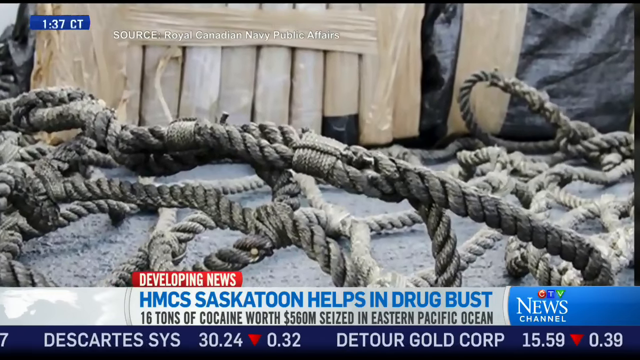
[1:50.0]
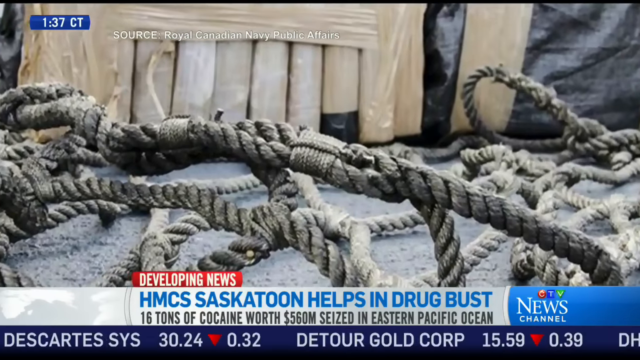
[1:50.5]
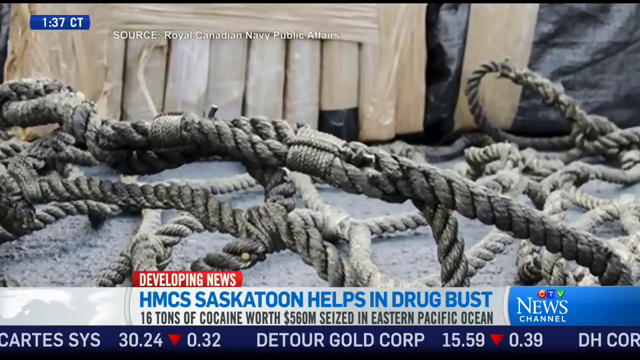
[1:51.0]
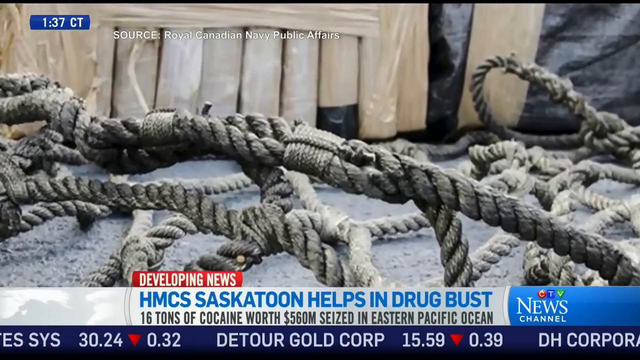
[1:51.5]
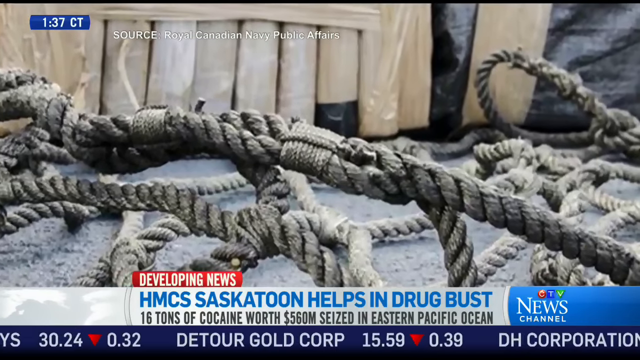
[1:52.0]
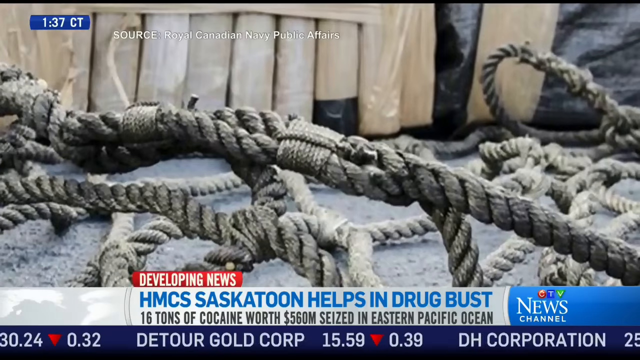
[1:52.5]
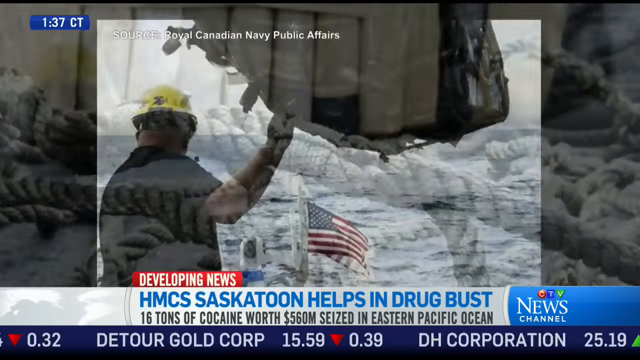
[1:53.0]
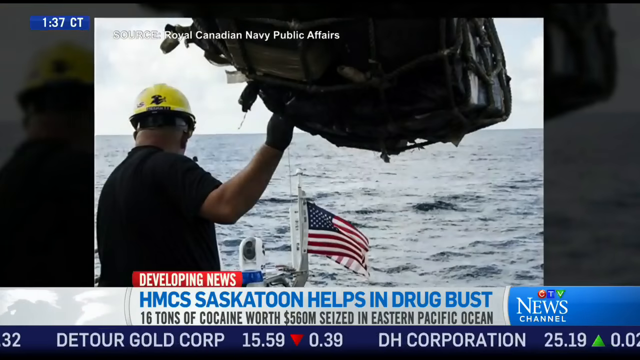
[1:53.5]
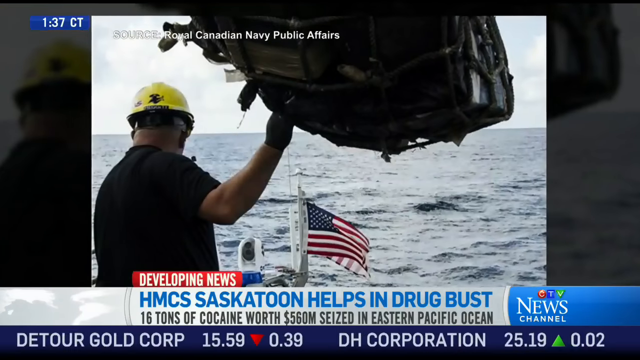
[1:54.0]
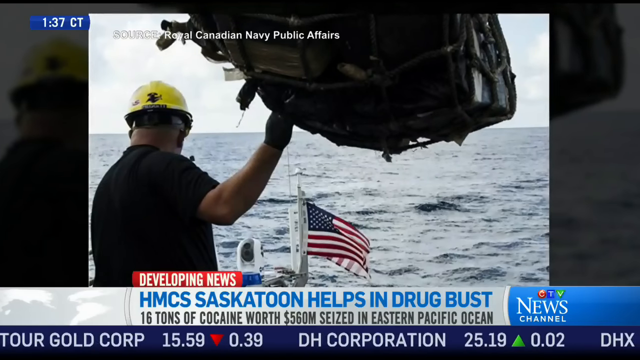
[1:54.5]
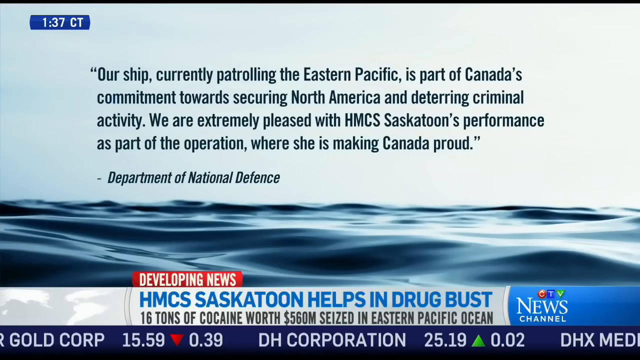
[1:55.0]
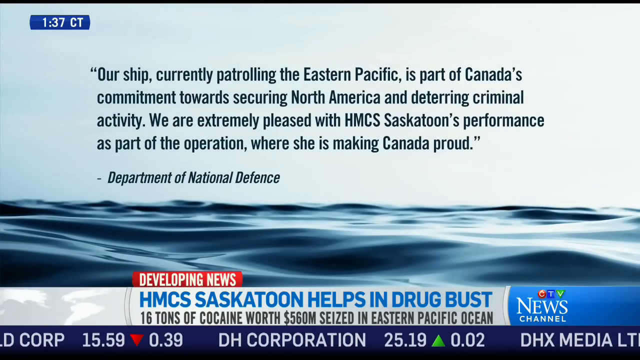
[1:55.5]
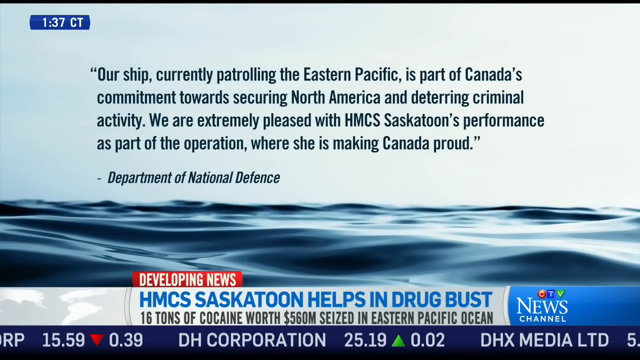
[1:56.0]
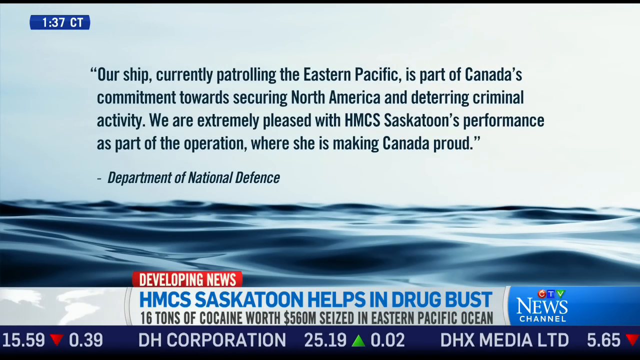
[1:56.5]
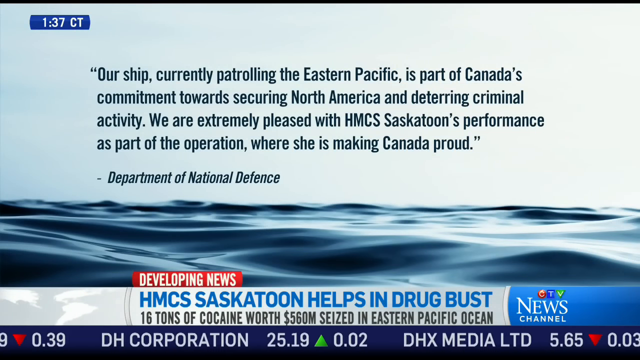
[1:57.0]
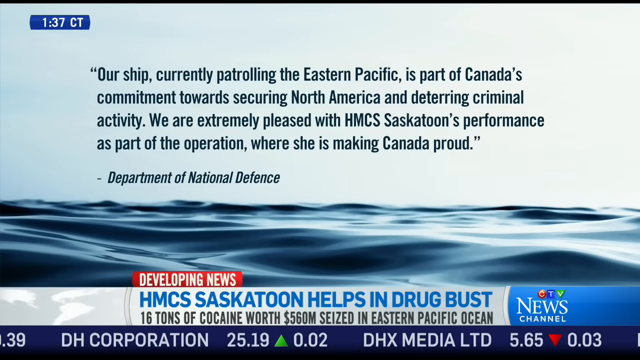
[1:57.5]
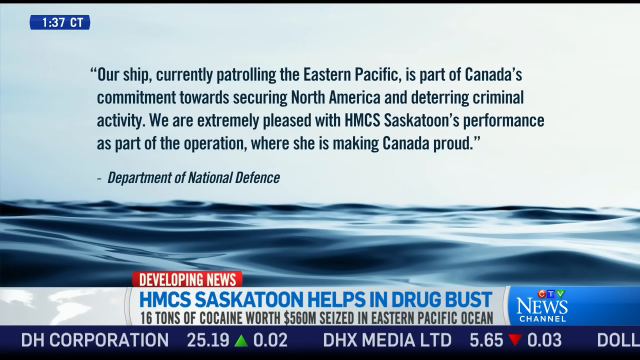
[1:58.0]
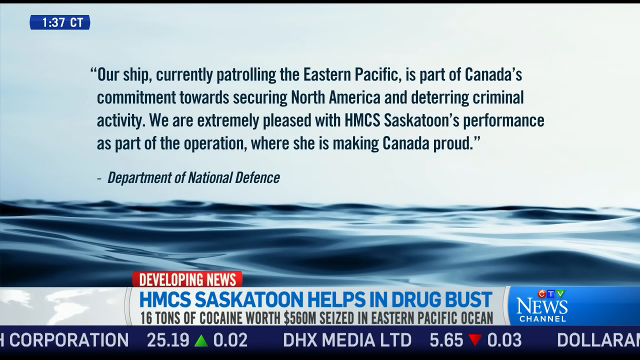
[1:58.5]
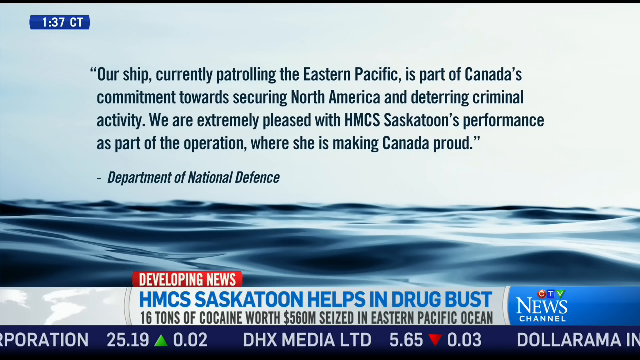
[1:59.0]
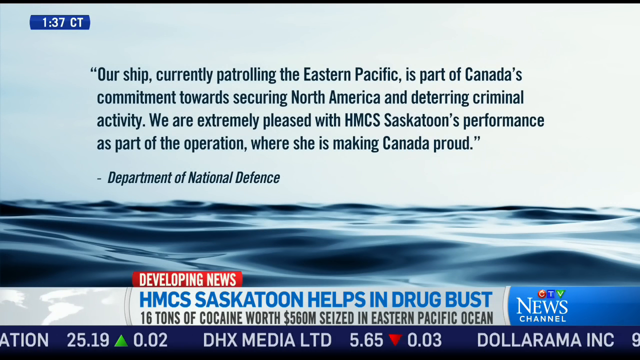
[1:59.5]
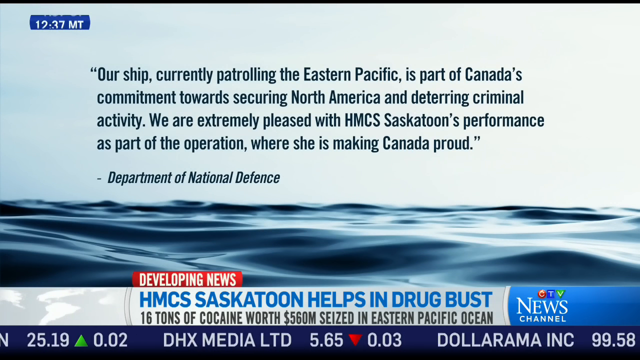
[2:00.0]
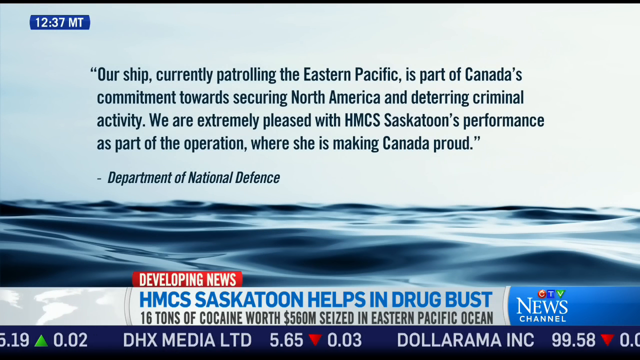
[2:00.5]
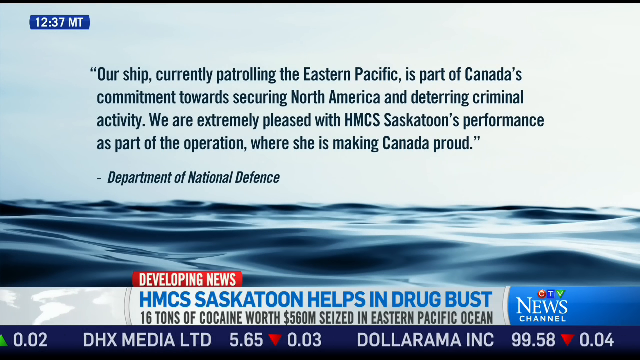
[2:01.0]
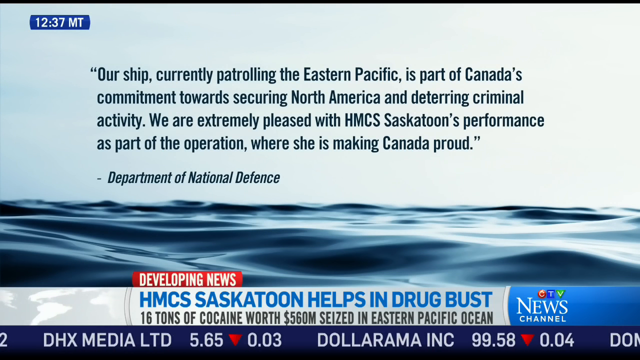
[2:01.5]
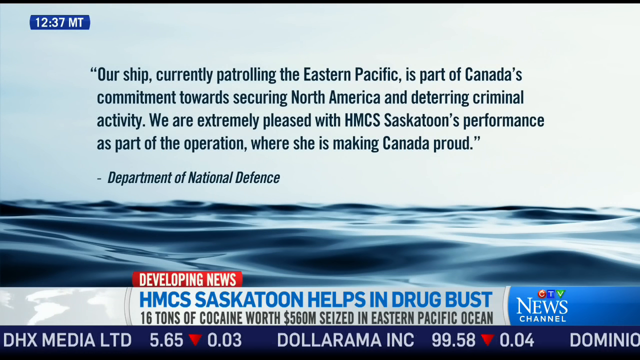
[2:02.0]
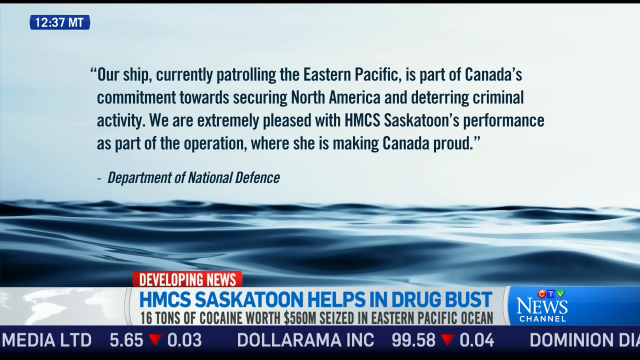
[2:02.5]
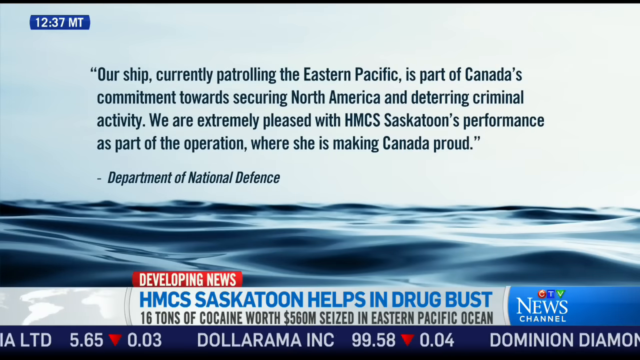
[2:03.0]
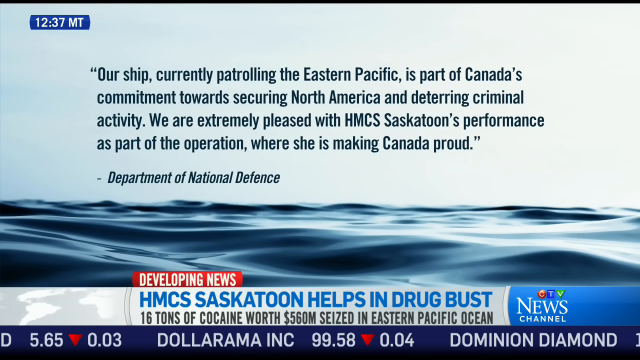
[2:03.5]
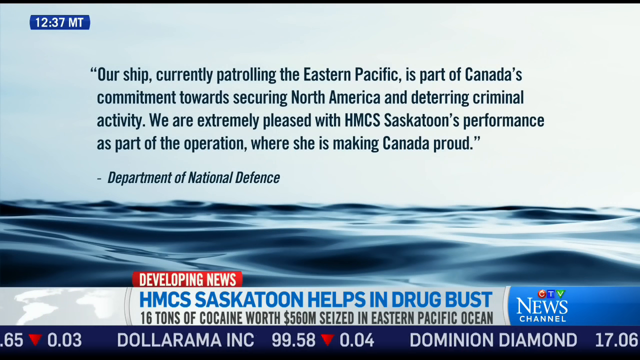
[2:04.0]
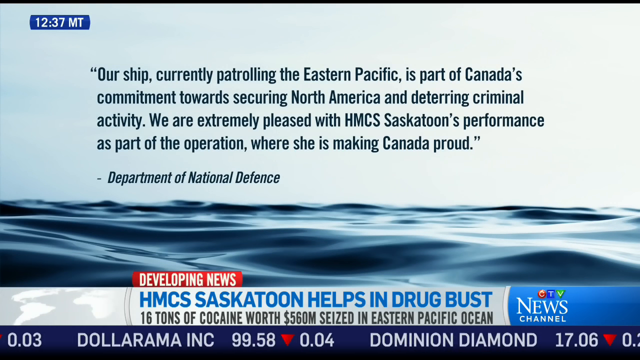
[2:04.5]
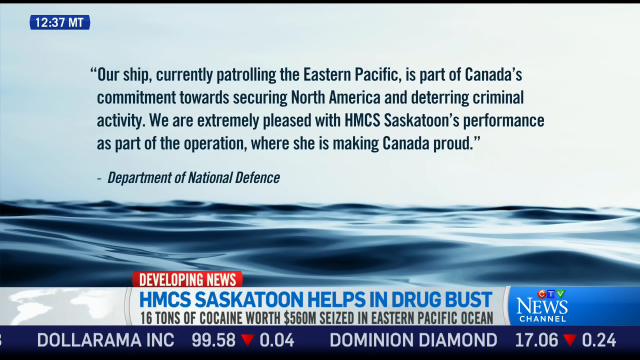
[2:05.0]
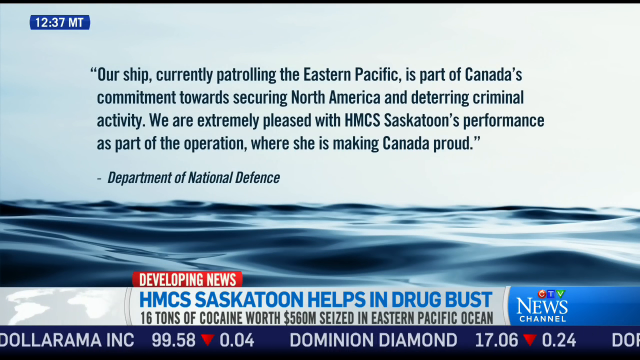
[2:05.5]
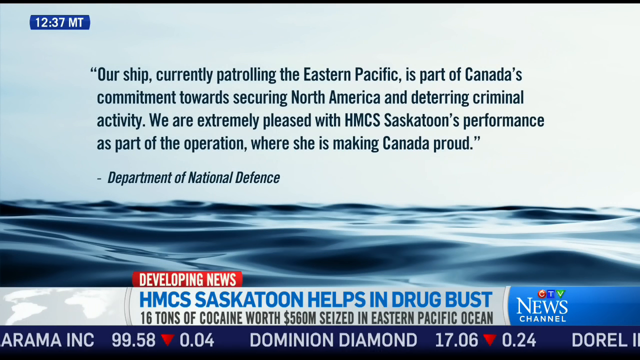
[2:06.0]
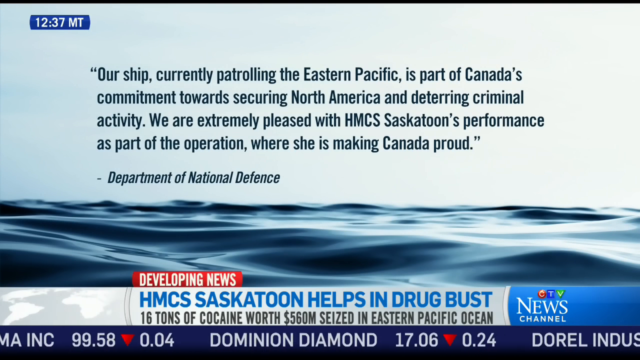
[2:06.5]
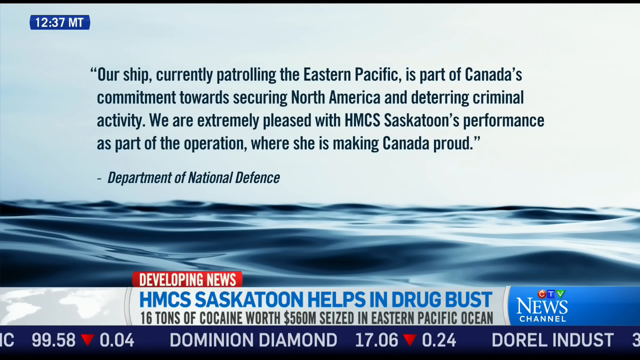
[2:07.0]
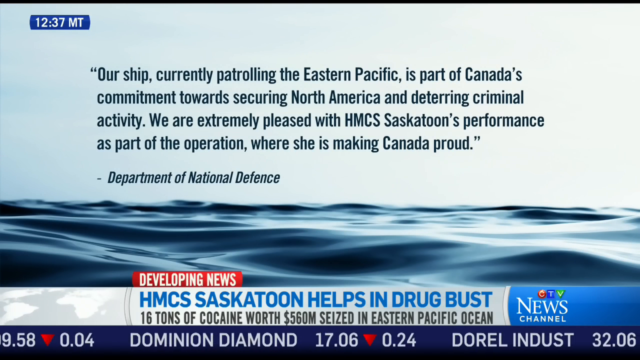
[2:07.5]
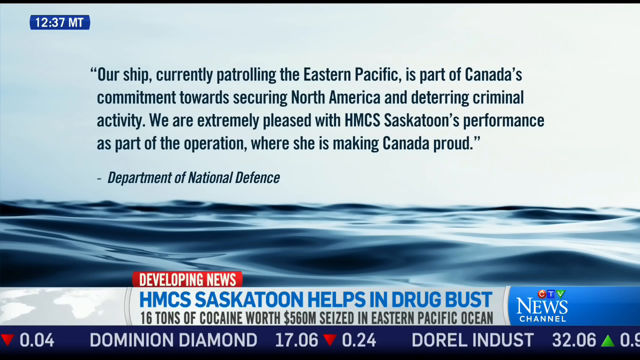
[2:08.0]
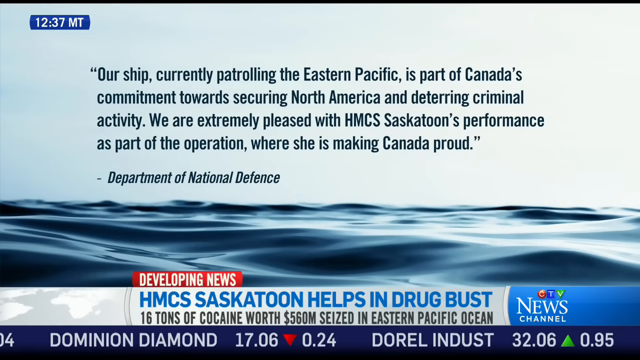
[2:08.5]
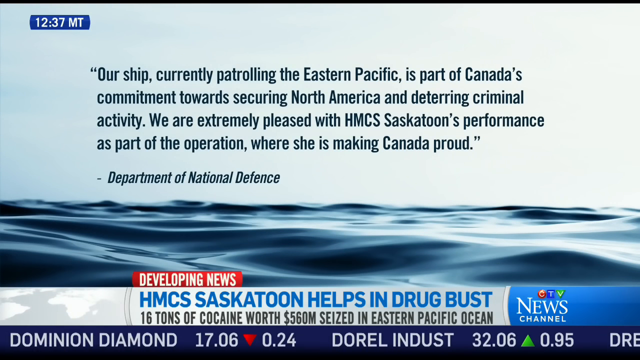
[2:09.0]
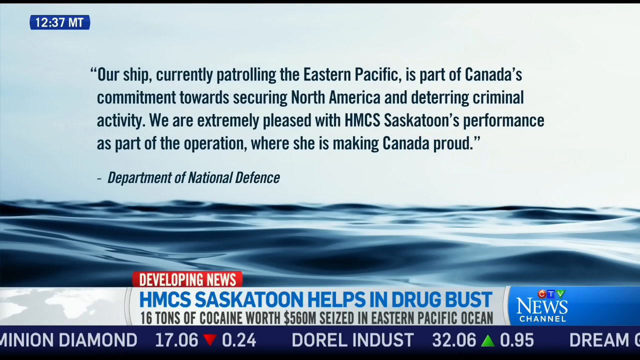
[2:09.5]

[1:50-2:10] A picture shows ropes and what look to be bricks of drugs taped together in the background, with the developing news text at the bottom reading "HMCS Saskatoon helps in drug bust 16 tons of cocaine worth 560 million seized in Eastern Pacific Ocean." The camera zooms into the rope in the picture. Another picture apparently shows the front of a boat with an American flag on the front, another boat and water in front. A man, who looks like he is helping direct the hoisting down of something fished out of the water, wears a yellow hard hat and gloves. Next comes a picture with a quote on it and water below: "Our ship currently patrolling the Eastern Pacific is part of Canada's commitment towards securing North America and deterring criminal activity. We are extremely pleased with the HMCS Saskatoon's performance as part of the operation where she is making Canada proud," attributed to the Department of National Defense. The picture of the quote stays on screen for a little while as the ticker at the bottom shows different stock performance.